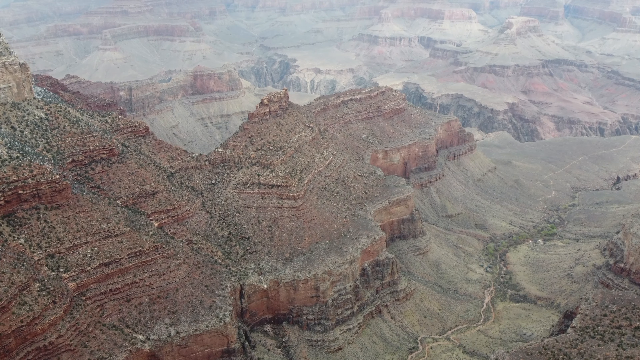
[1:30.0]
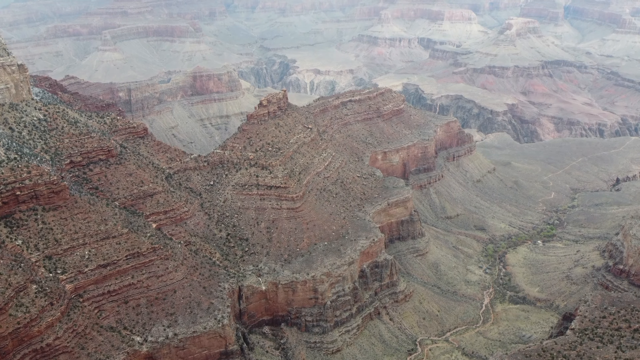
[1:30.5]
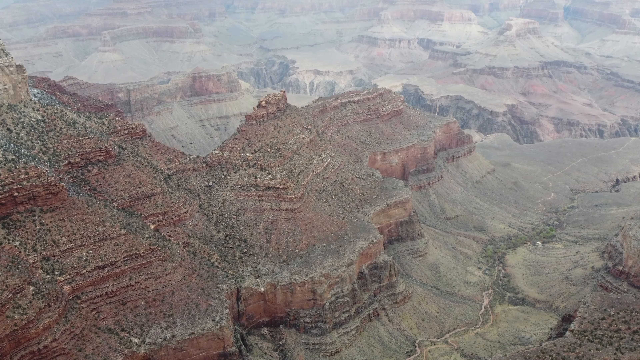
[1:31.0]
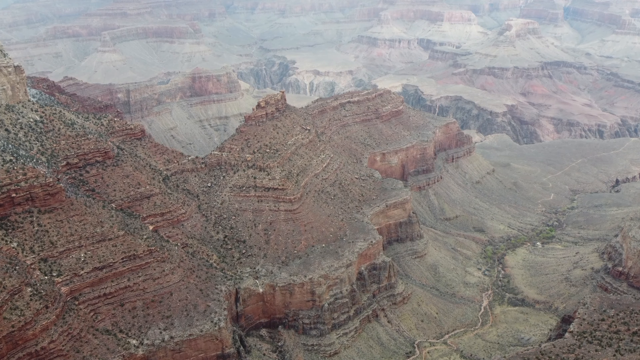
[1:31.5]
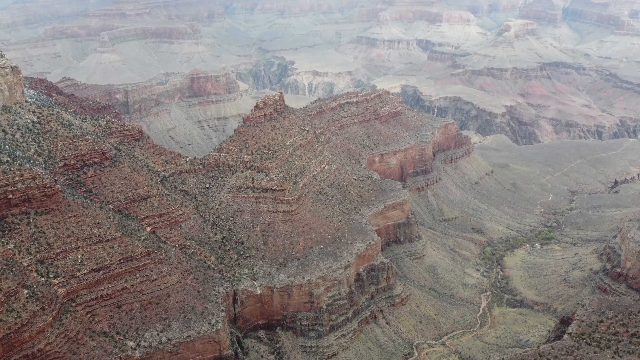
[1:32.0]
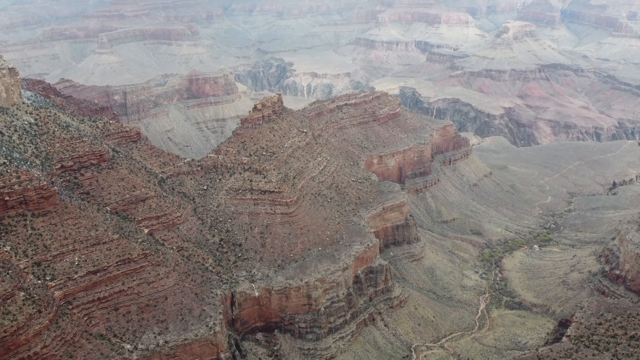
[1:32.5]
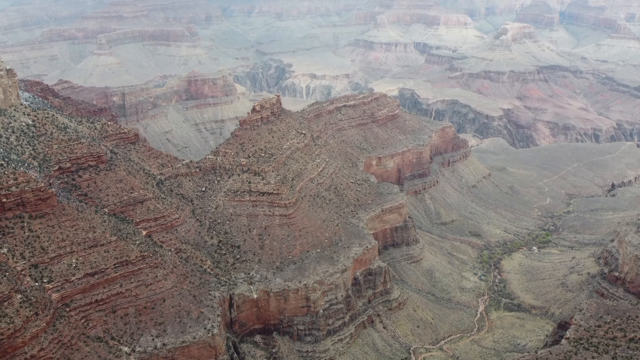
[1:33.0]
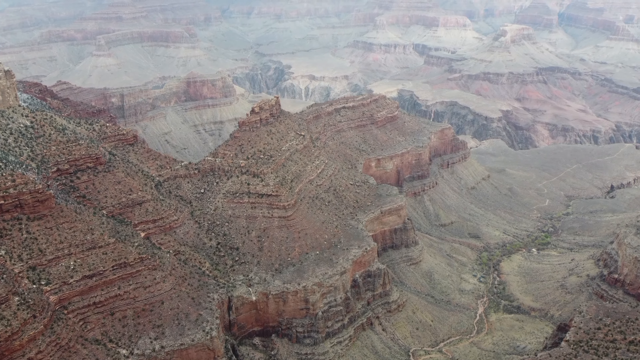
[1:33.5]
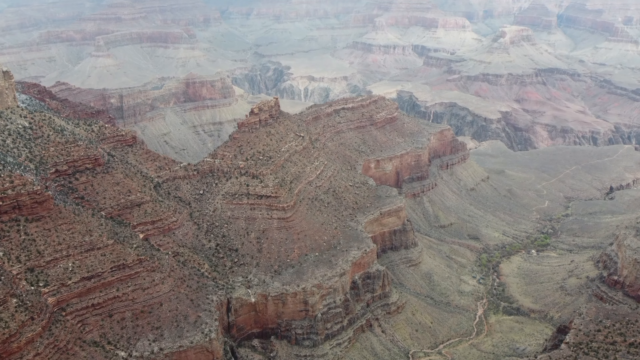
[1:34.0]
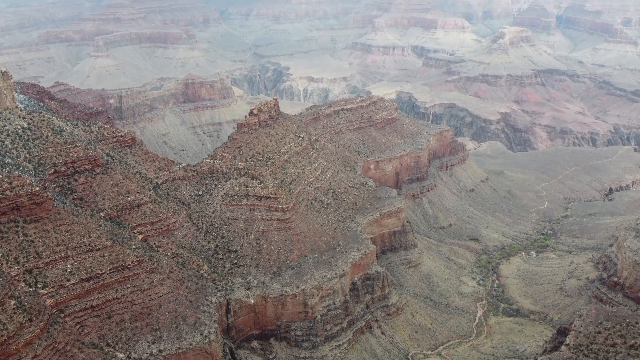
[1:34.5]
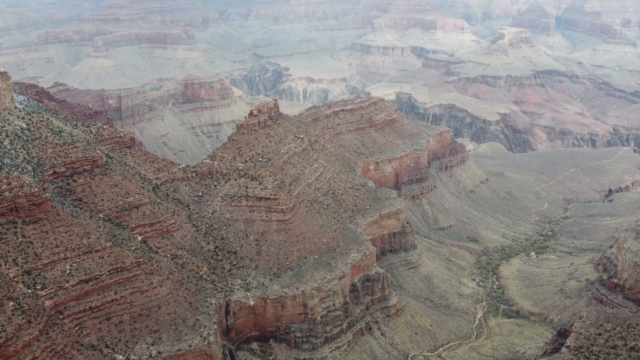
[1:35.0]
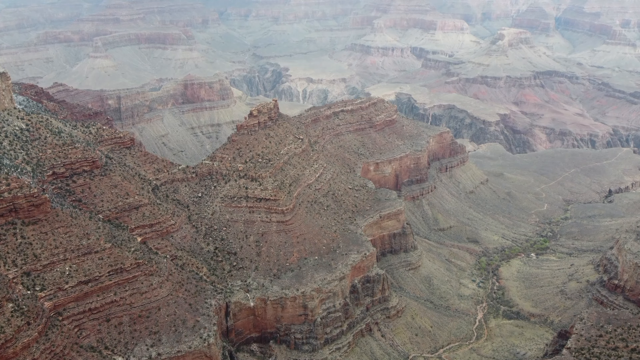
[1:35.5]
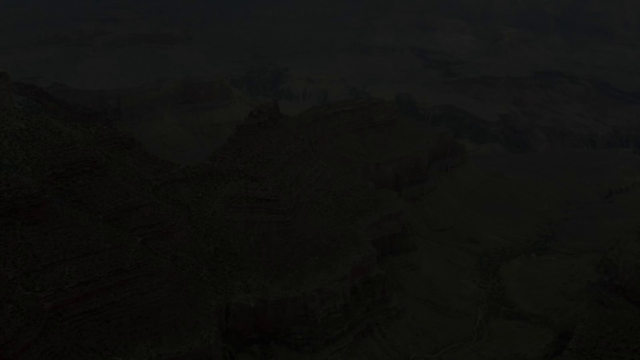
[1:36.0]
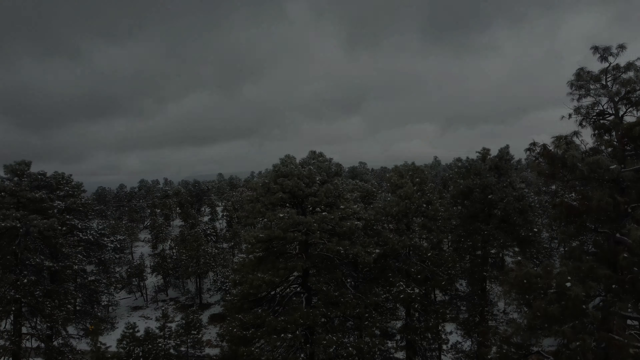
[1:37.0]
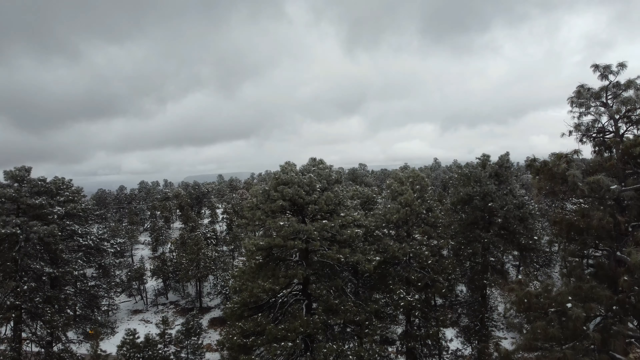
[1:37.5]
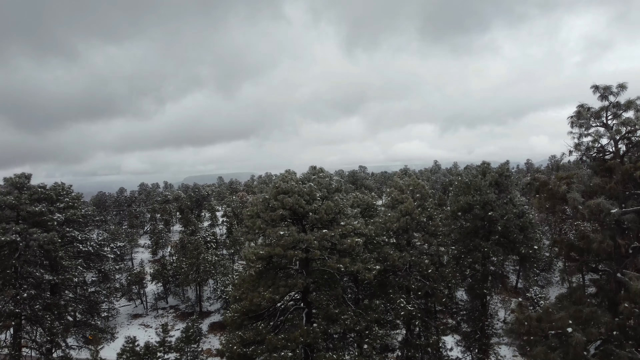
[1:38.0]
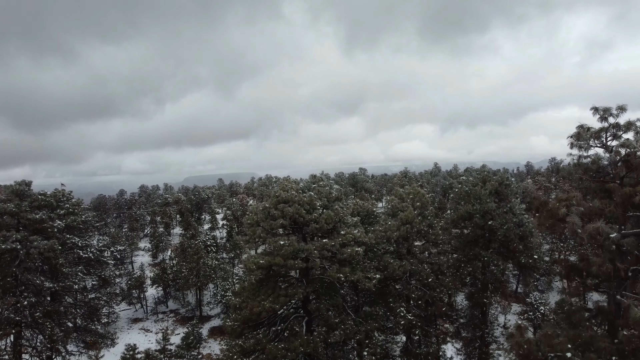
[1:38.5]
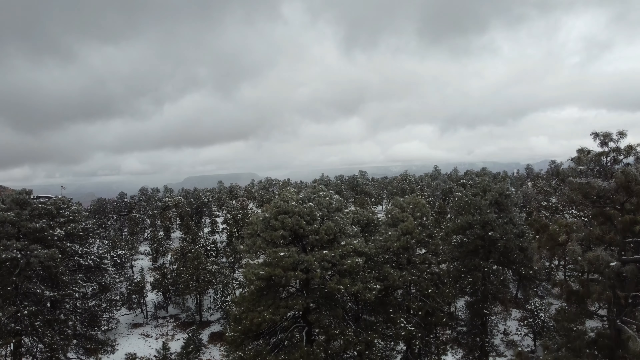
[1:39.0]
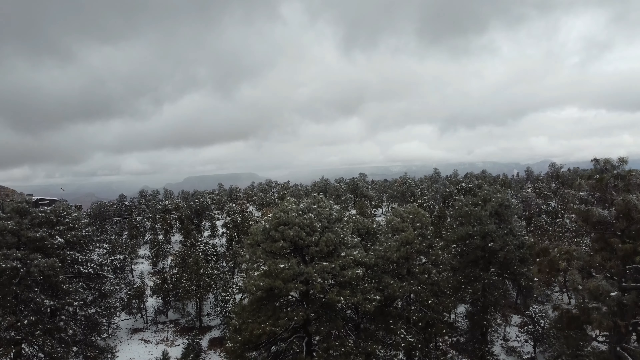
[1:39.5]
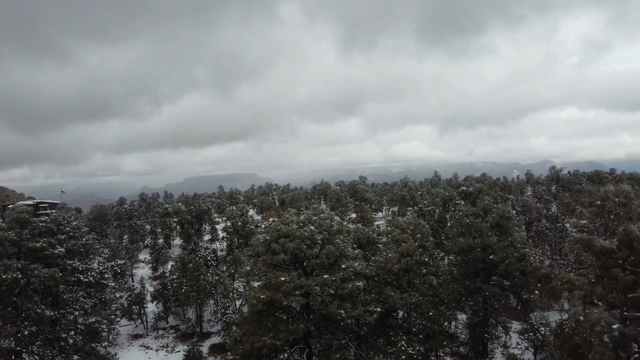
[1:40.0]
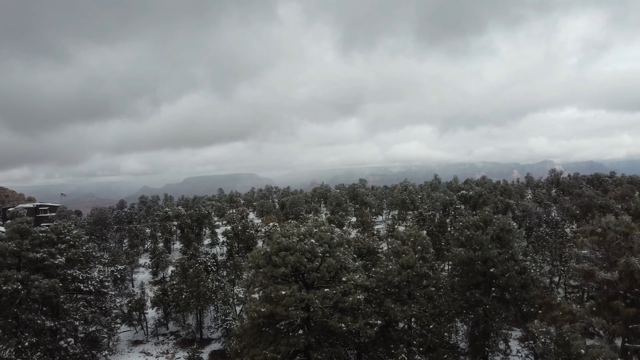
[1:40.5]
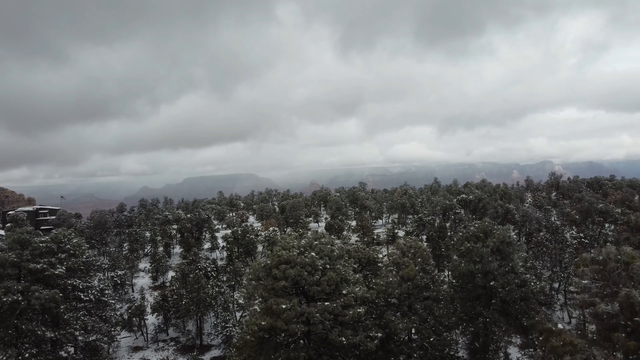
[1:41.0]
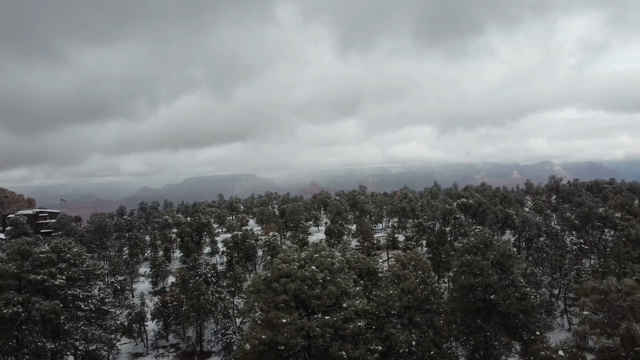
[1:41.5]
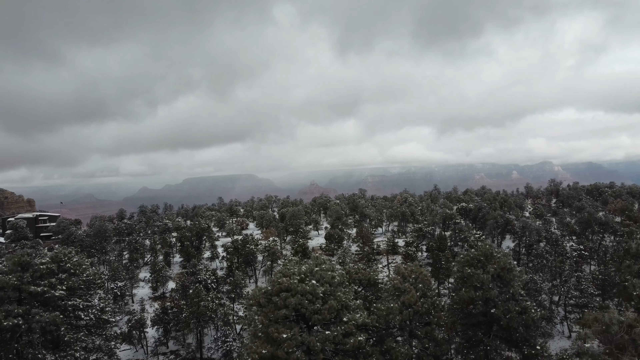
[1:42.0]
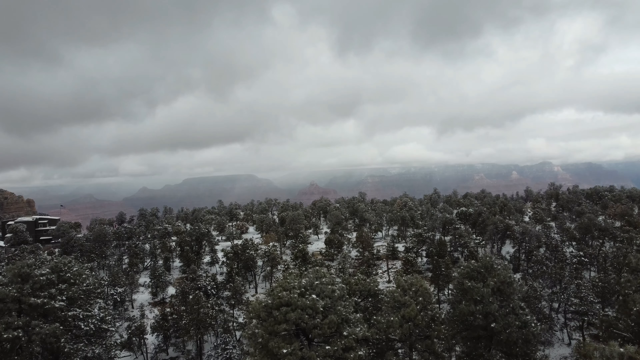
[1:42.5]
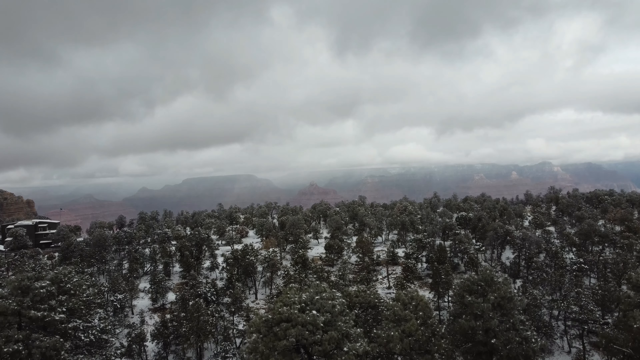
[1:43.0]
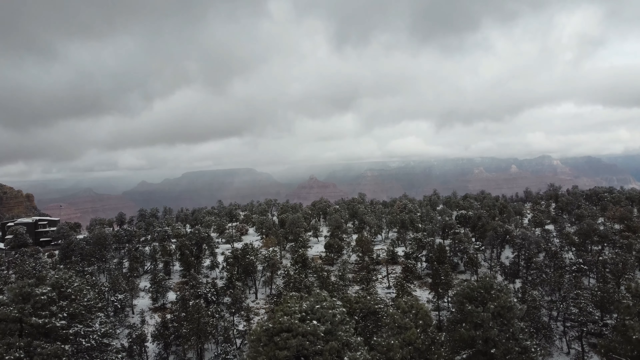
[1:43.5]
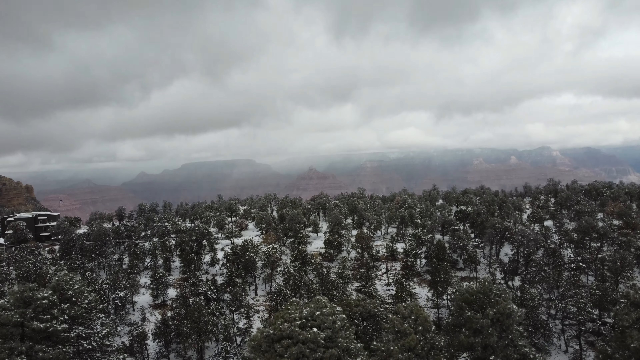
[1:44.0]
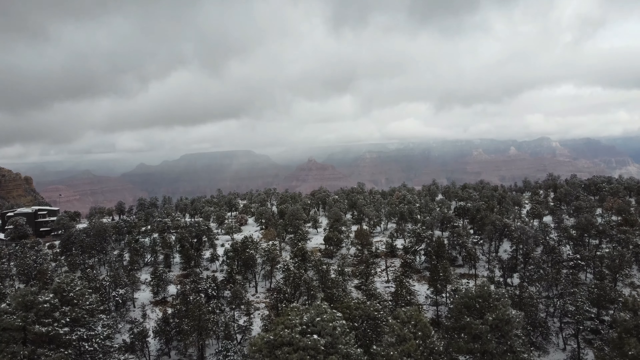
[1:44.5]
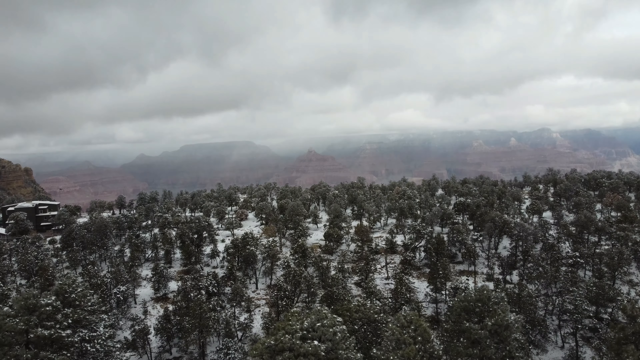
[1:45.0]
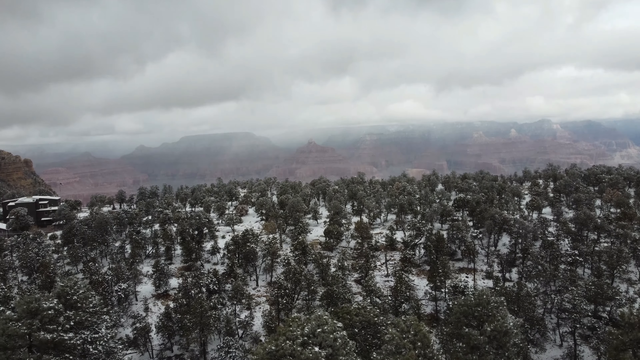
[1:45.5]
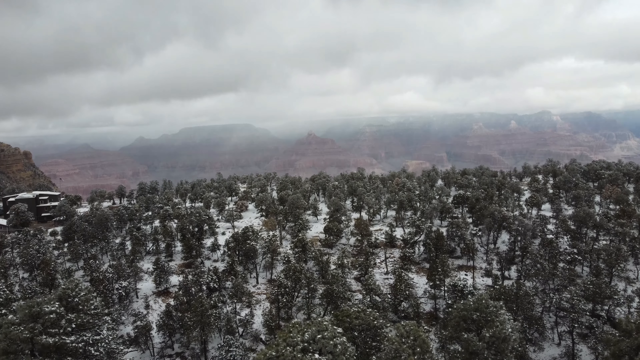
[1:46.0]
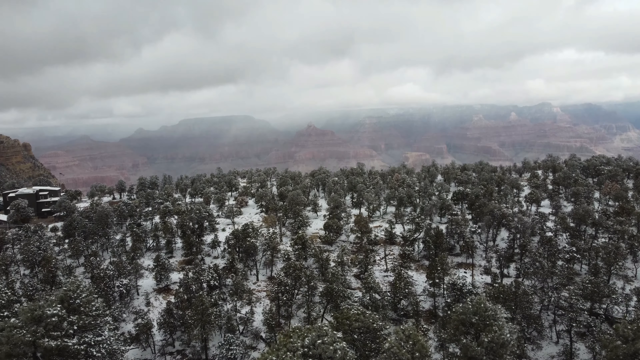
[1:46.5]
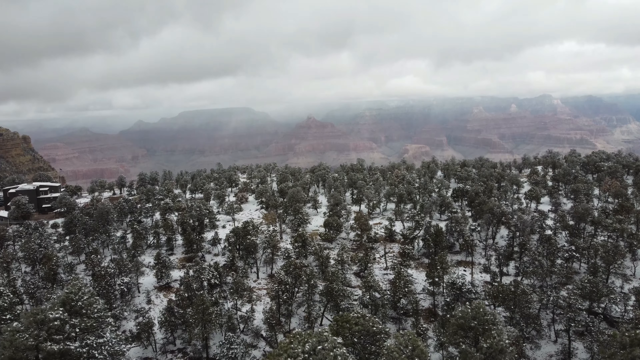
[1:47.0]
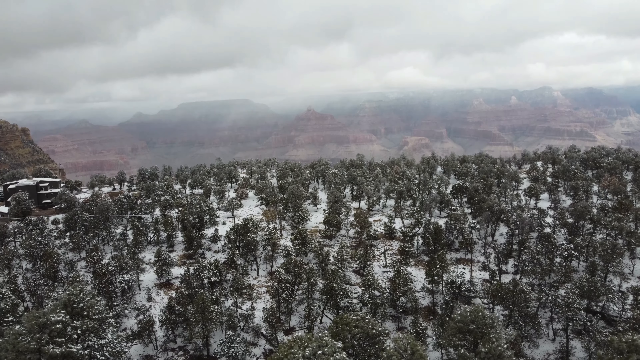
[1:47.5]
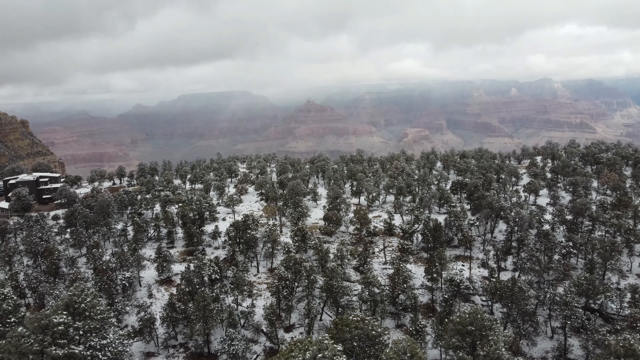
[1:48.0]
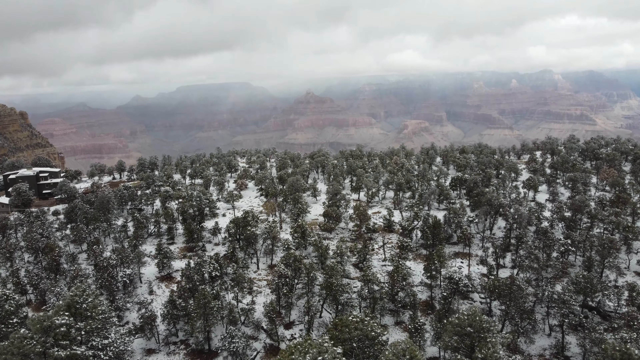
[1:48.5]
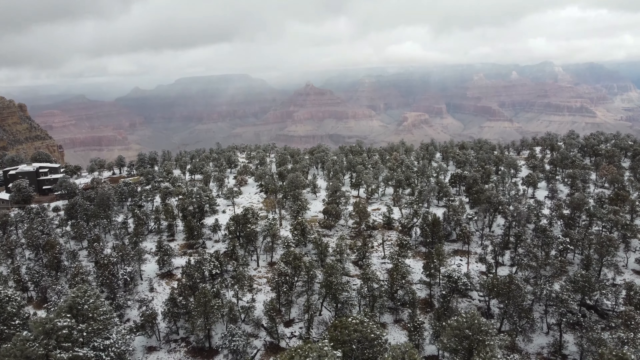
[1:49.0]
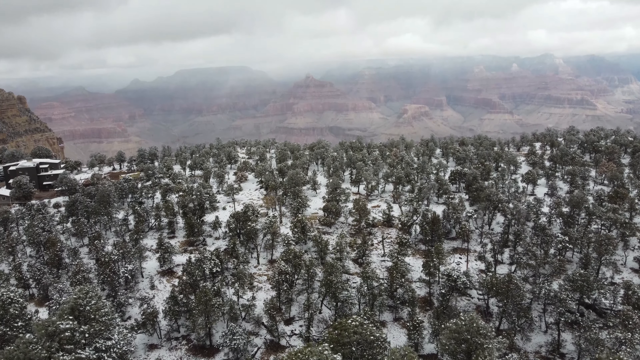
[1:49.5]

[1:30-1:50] The Grand Canyon is seen from above in what looks like a drone or satellite shot, and the canyon moves slightly. Another shot shows a close-up of what looks like a snowy area with multiple trees in a forest. Above, it is very cloudy, and the camera moves up from the trees, flying up as a drone shot. The Grand Canyon then appears far in the background, with shots of the Grand Canyon in the snow.